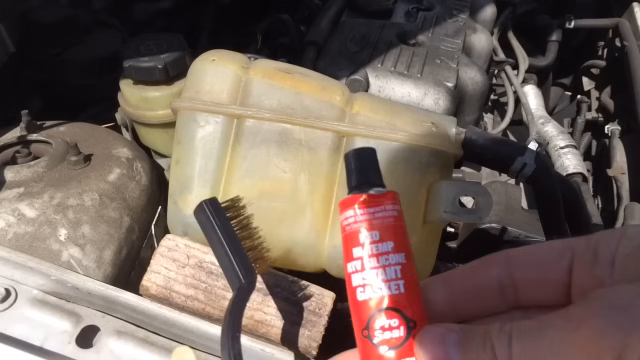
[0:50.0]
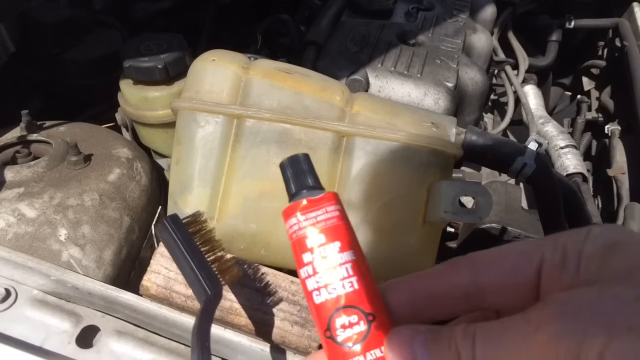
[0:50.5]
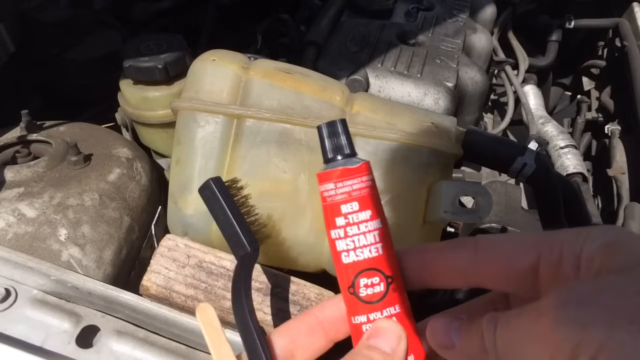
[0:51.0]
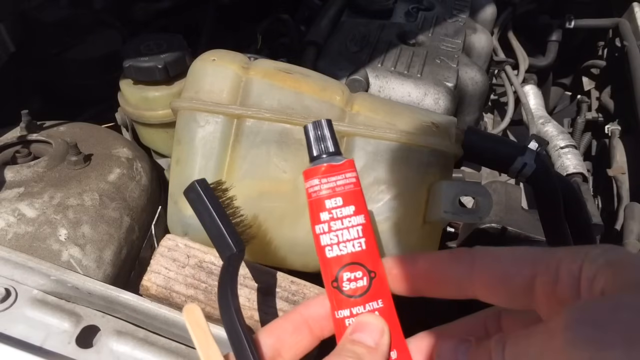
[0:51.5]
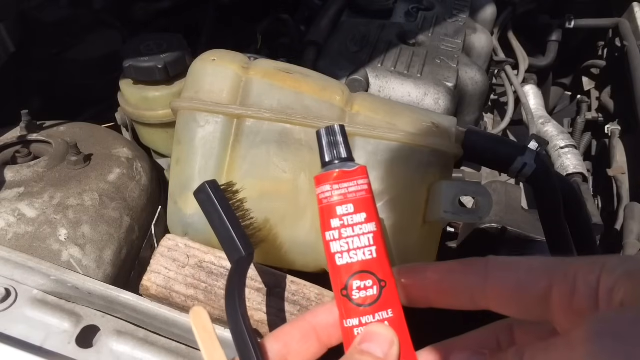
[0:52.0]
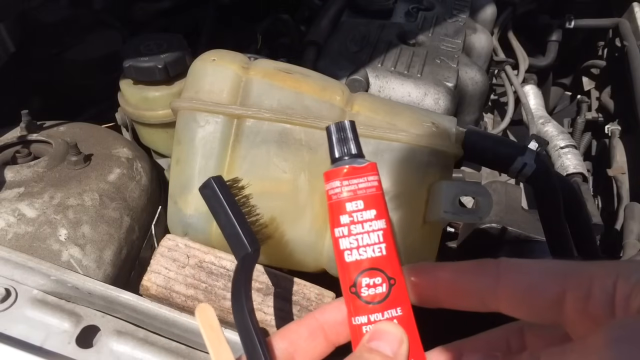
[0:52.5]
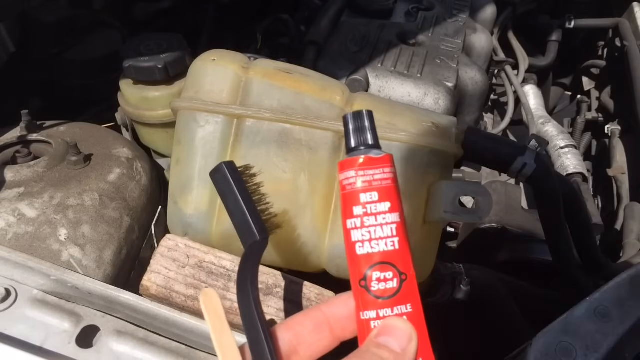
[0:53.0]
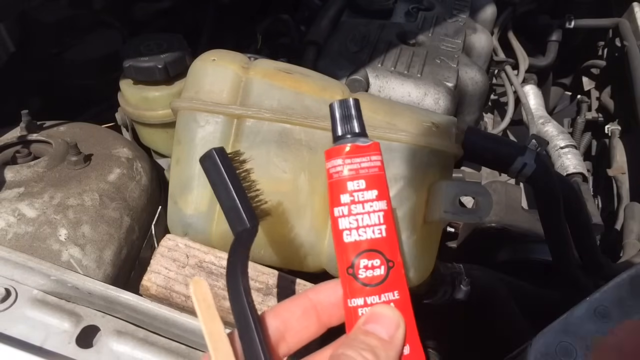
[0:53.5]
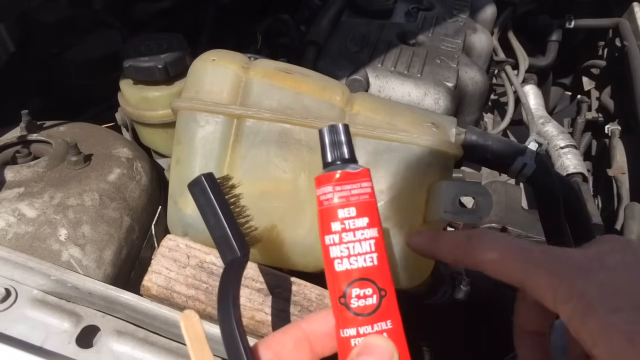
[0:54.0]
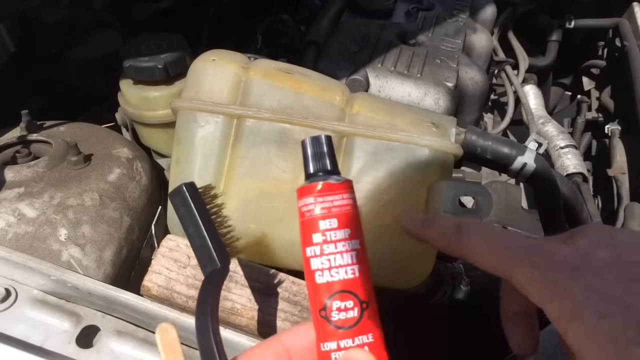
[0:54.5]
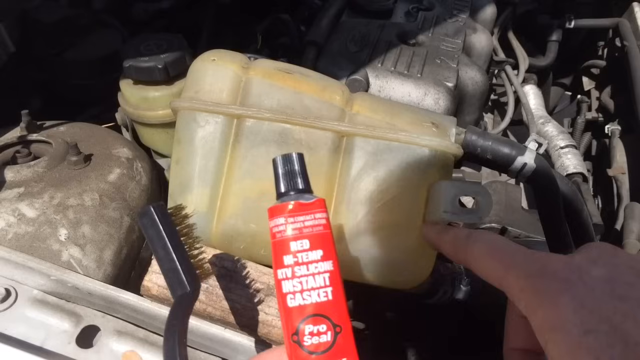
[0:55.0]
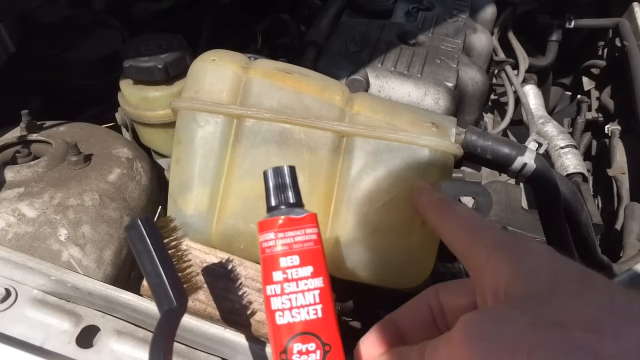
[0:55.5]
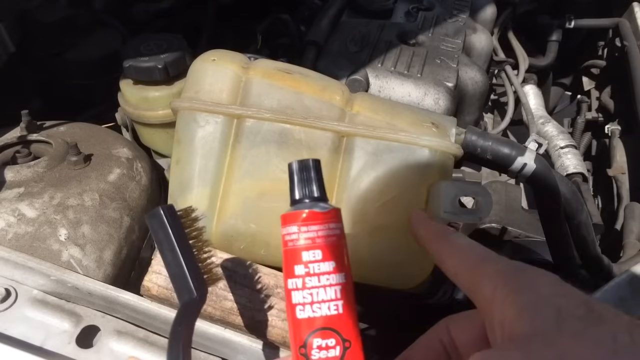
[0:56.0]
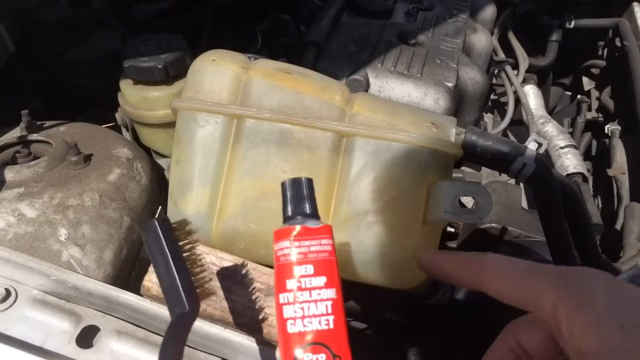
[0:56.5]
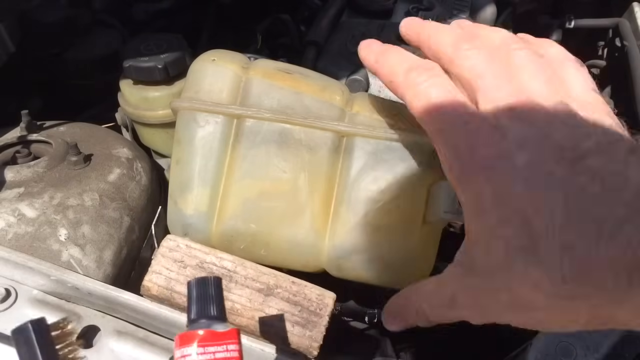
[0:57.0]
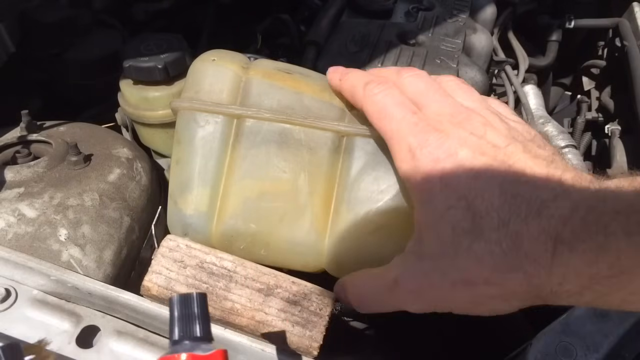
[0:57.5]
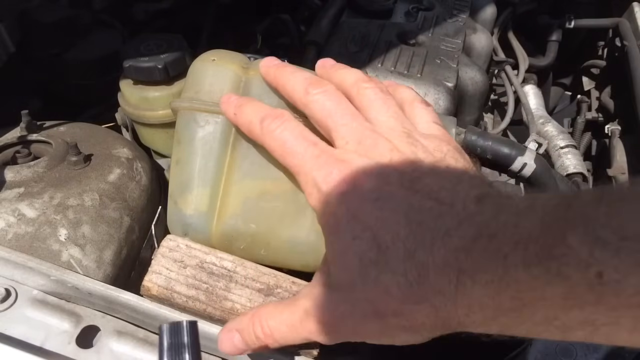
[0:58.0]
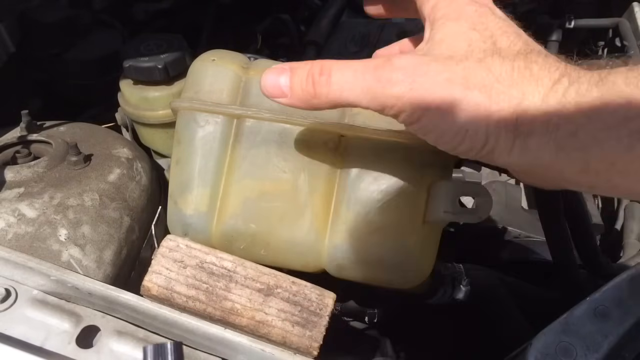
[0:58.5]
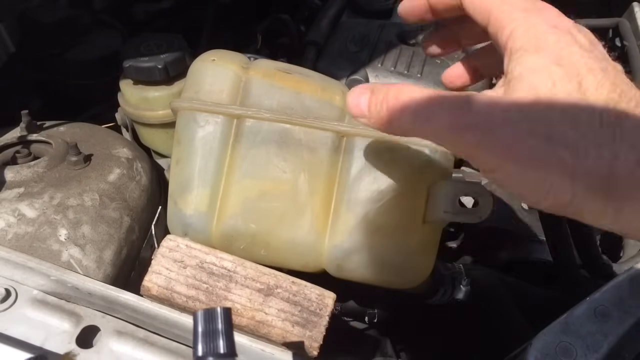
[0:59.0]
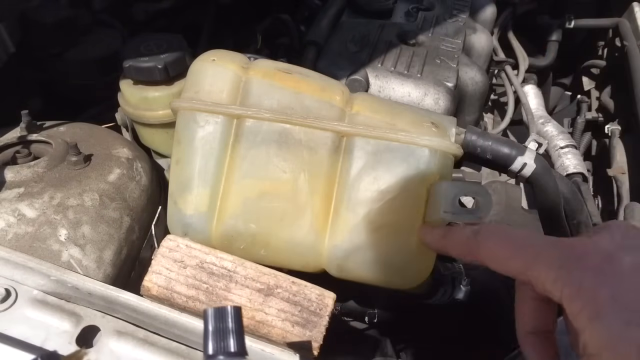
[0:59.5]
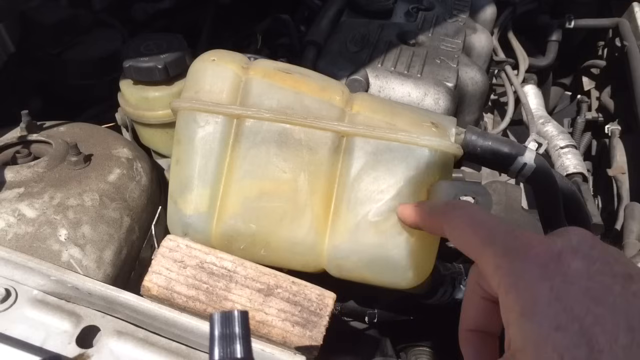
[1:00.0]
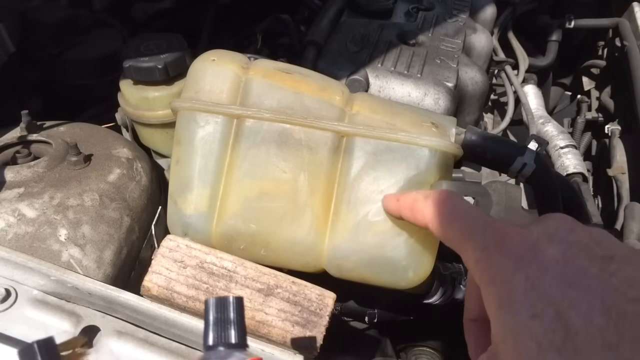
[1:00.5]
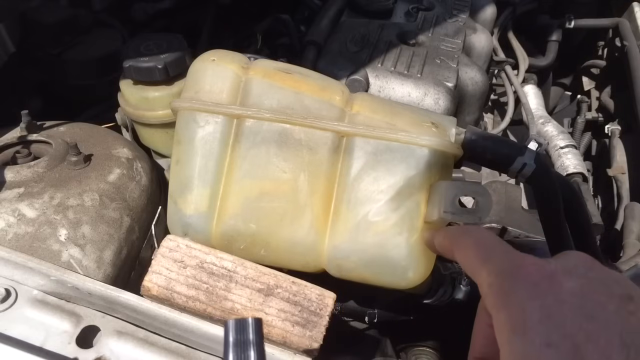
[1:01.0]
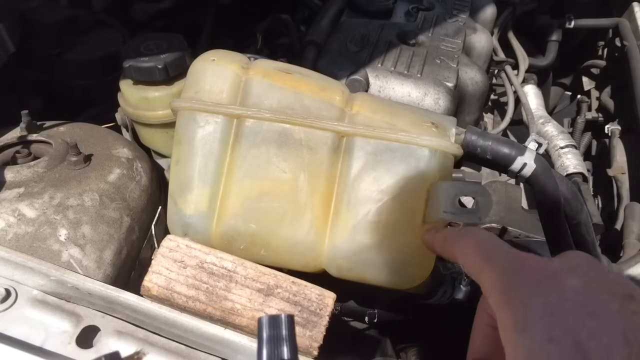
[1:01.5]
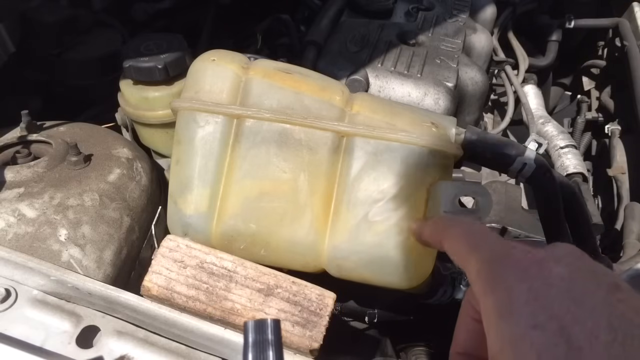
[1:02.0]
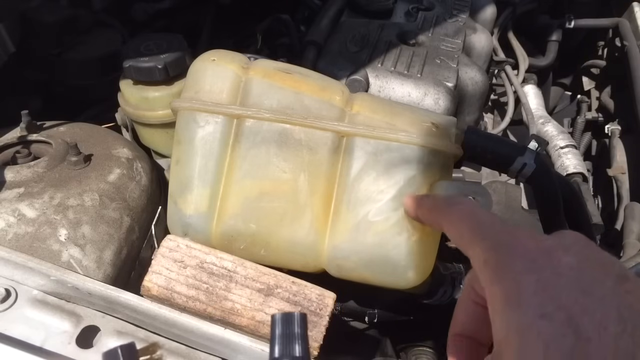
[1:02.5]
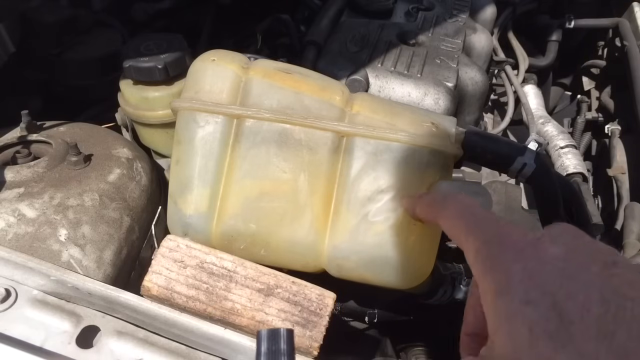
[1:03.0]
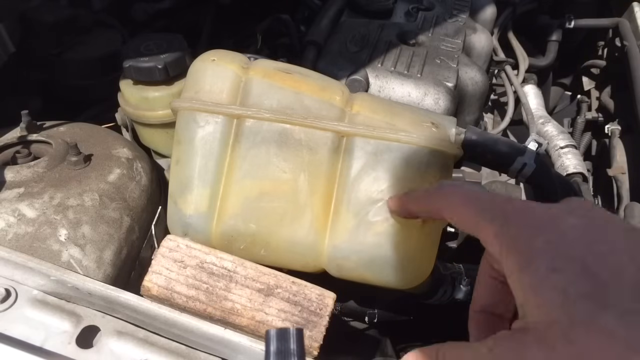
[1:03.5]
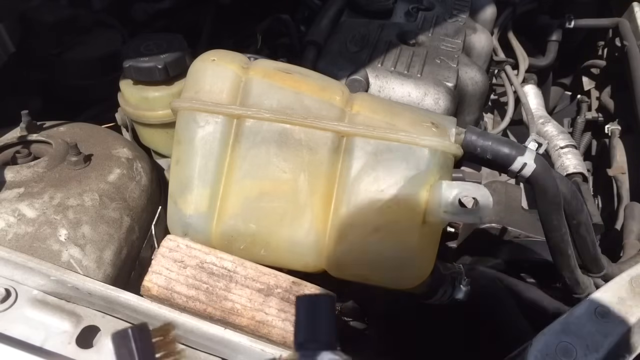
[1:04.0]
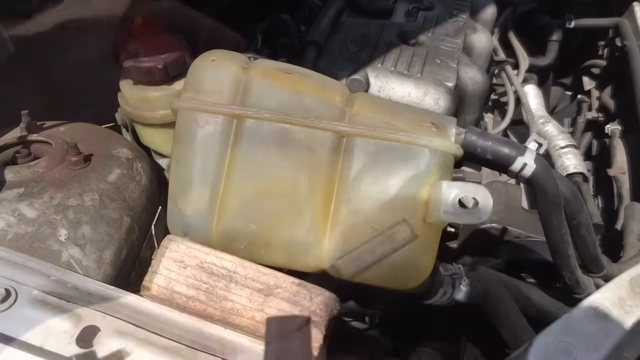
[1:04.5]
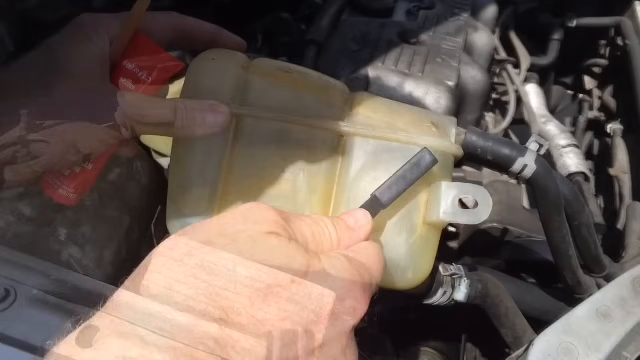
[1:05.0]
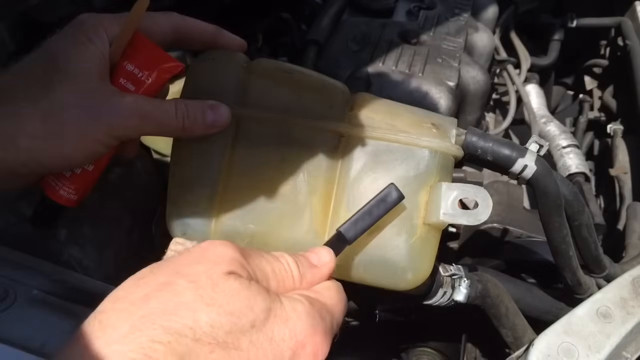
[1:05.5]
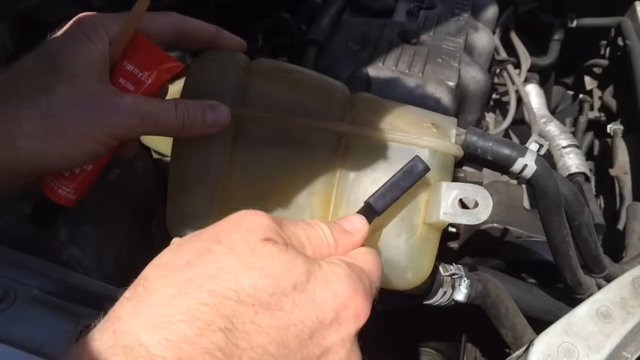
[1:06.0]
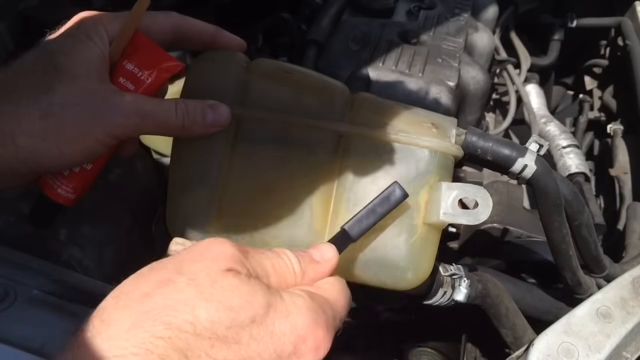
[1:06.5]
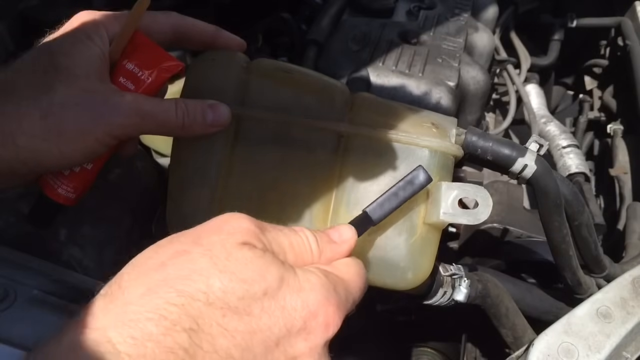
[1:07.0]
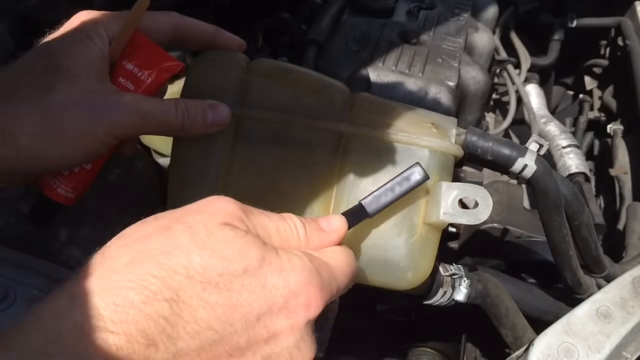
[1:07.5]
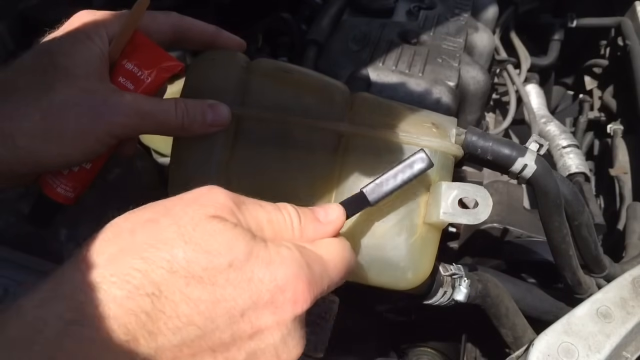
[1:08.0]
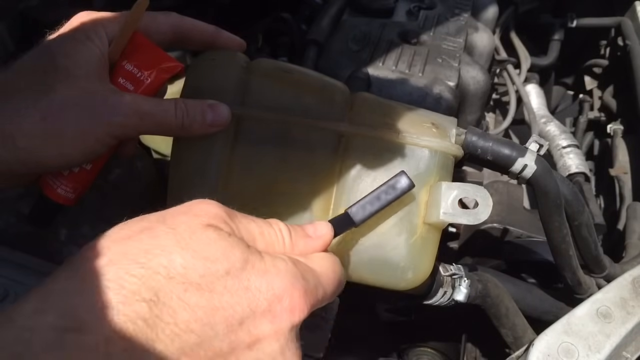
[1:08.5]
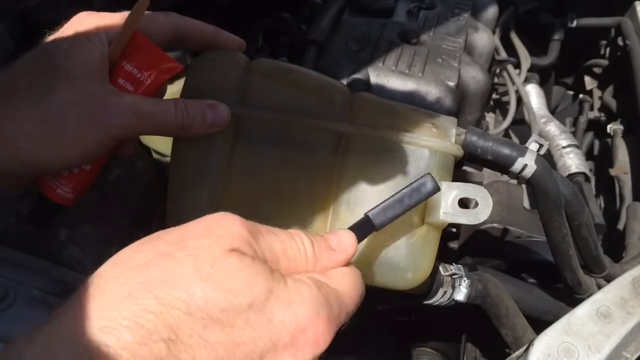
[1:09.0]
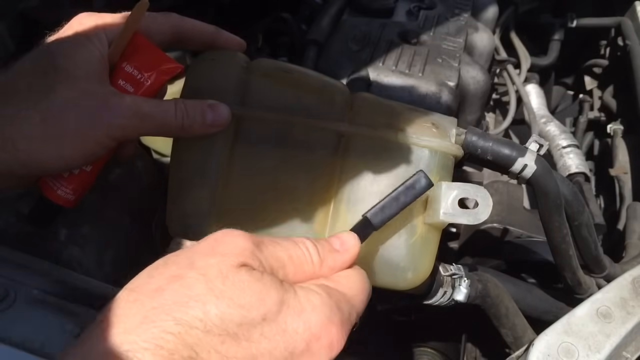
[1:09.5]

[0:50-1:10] A Caucasian hand holds a red tube of gasket seal, with the brand shown in the middle as the words "ProSeal" with a black circle around them. The person holds a metal wire brush in the left hand with the tube beside it. The person's head casts a shadow on the coolant reservoir tank that moves along with the head. The right hand points at the coolant tank, circling the bottom right corner, then grips the tank with four fingers over the top and the thumb around the bottom side. The person motions as if lifting the tank, moves the hand back, and points again at the bottom right portion of the tank, seemingly talking about it. After a transition, the person uses the metal wire brush, a thin rectangular brush that looks similar to a toothbrush, in the right hand, moving it back and forth in short motions on the bottom right corner of the tank.